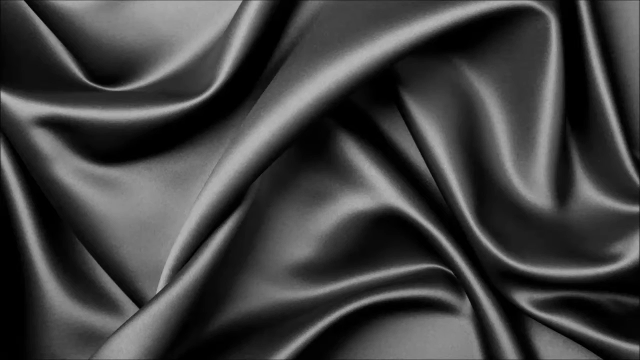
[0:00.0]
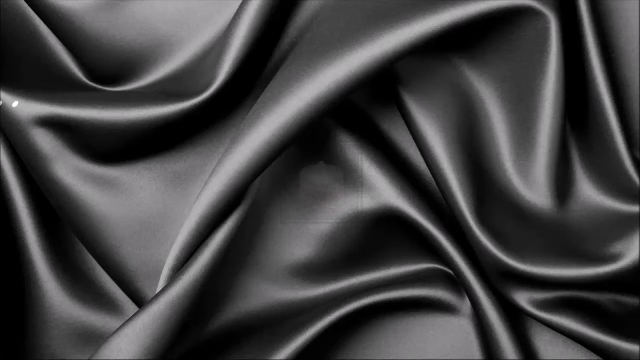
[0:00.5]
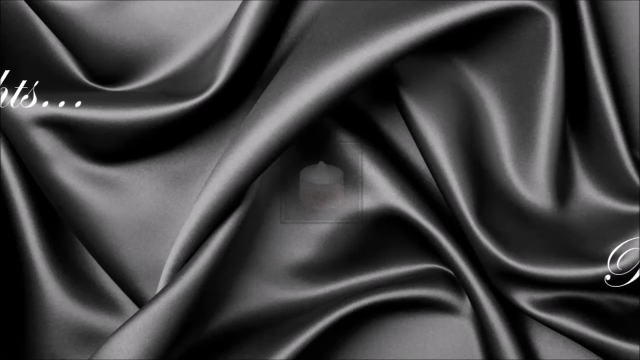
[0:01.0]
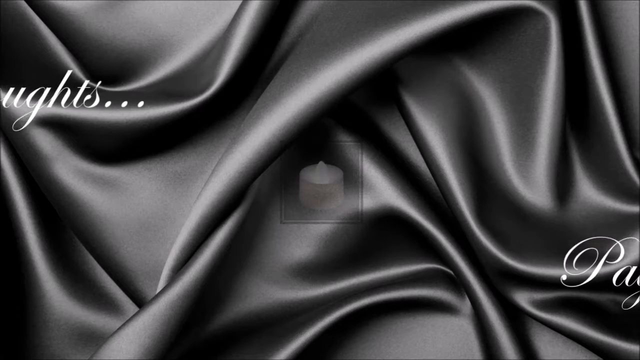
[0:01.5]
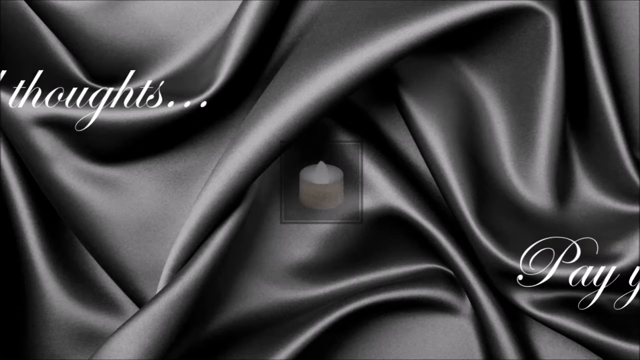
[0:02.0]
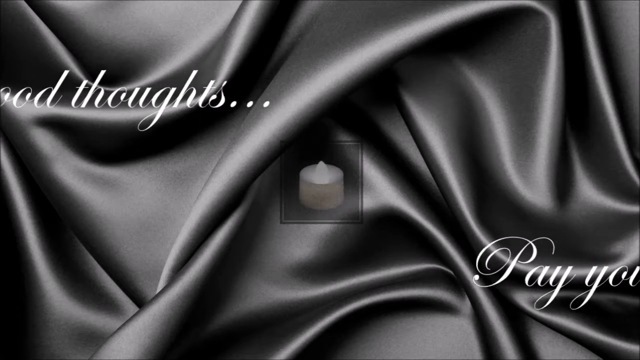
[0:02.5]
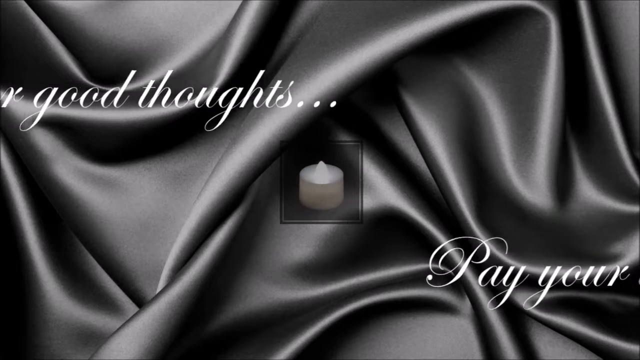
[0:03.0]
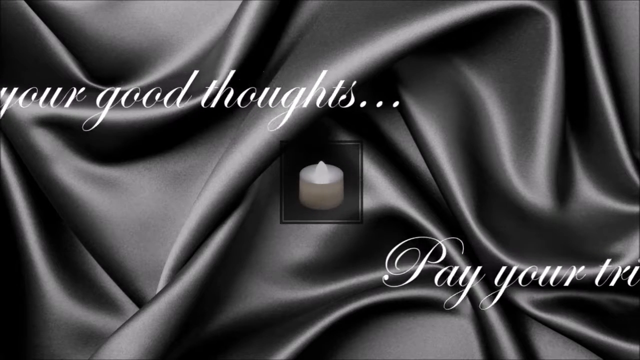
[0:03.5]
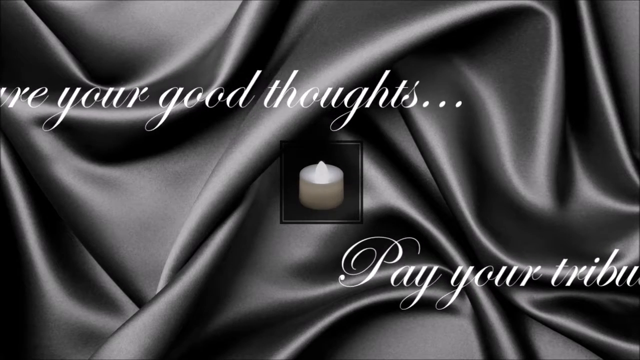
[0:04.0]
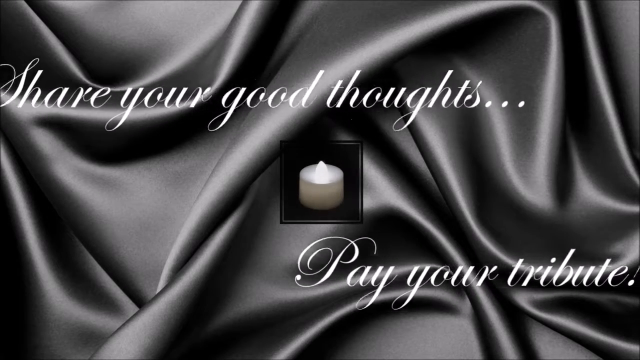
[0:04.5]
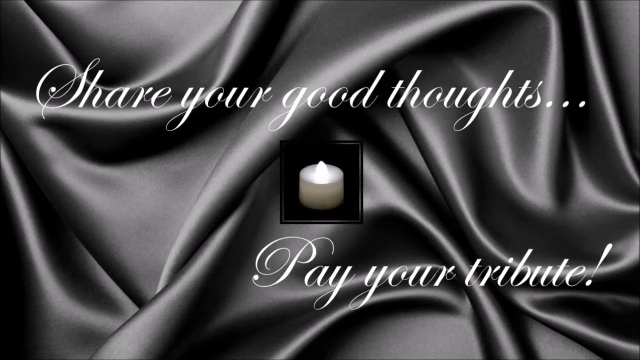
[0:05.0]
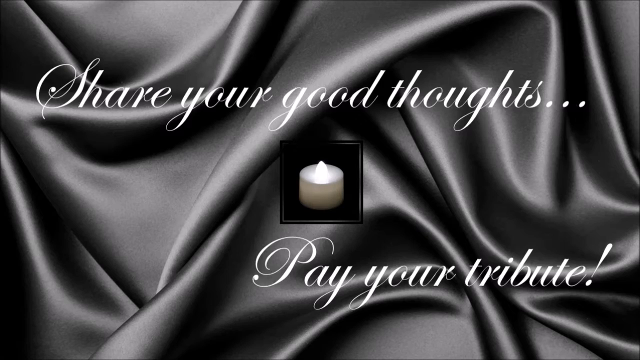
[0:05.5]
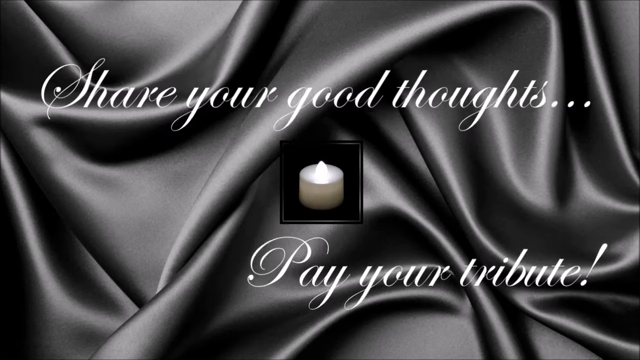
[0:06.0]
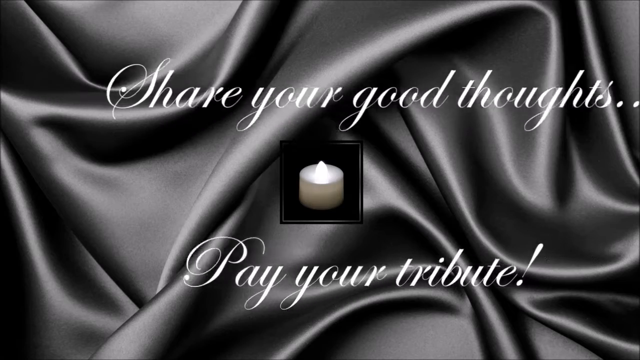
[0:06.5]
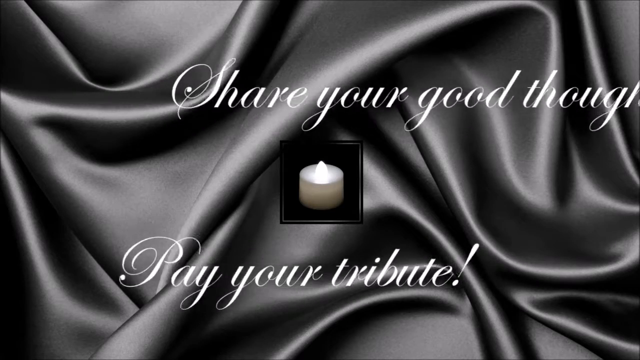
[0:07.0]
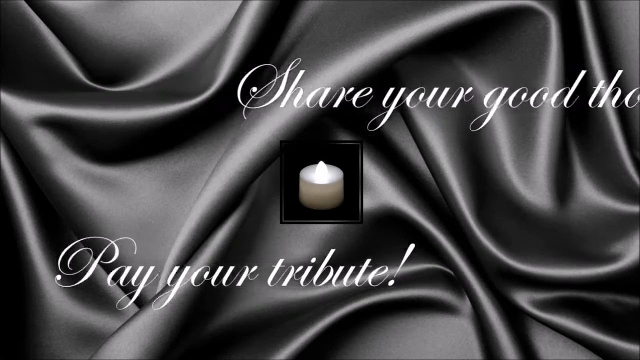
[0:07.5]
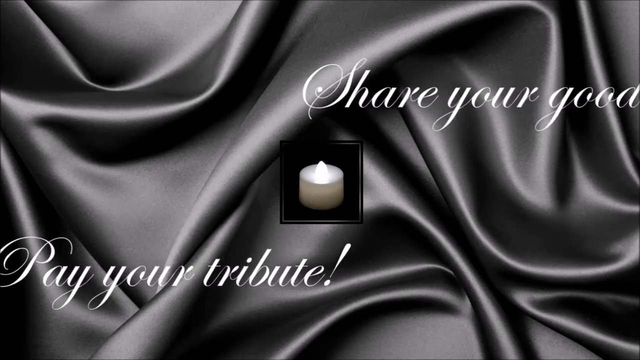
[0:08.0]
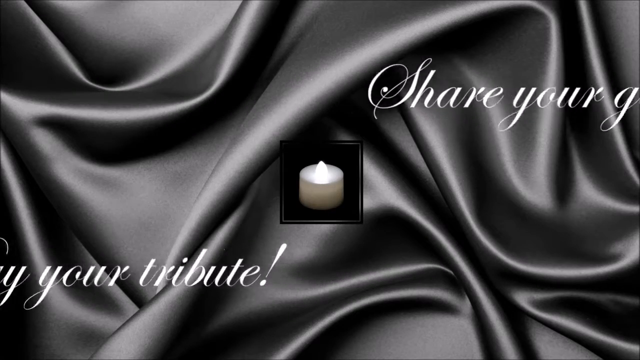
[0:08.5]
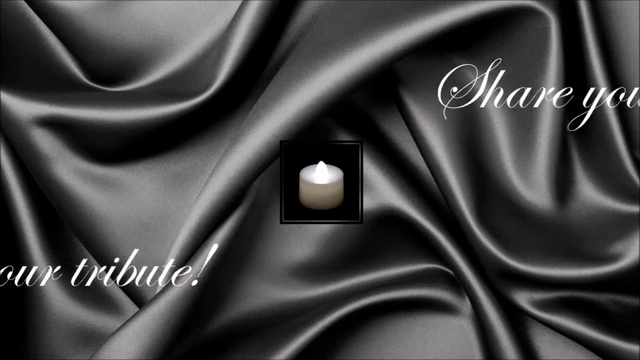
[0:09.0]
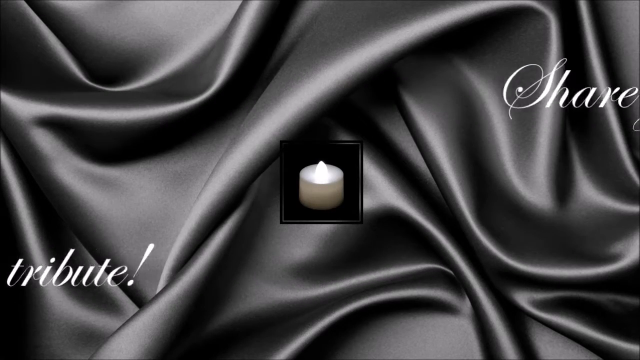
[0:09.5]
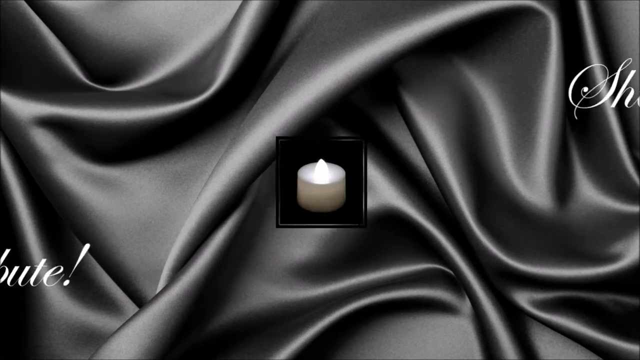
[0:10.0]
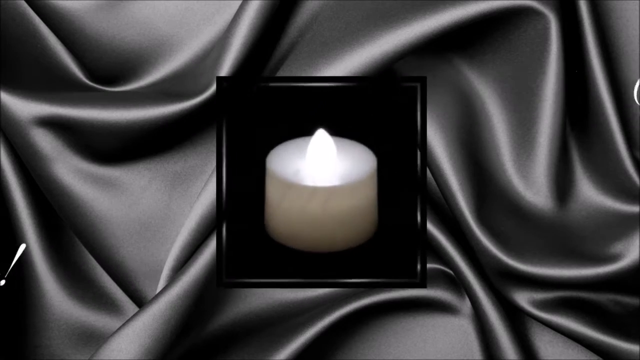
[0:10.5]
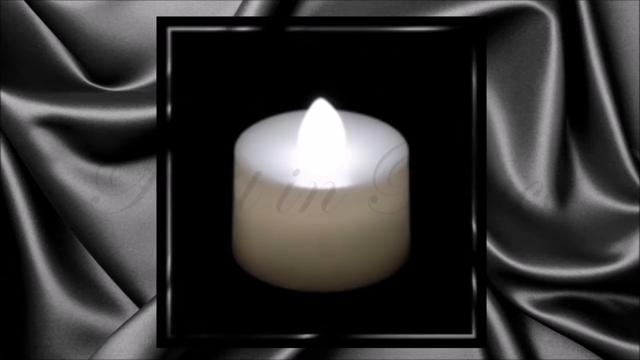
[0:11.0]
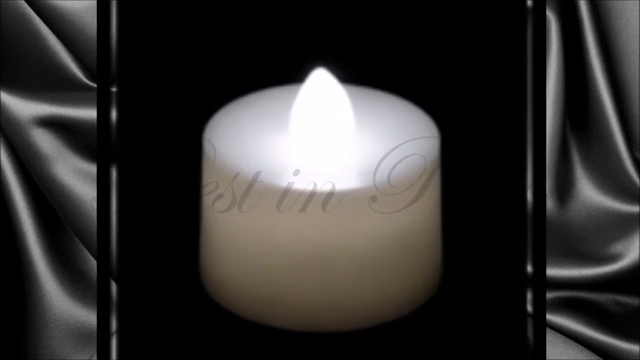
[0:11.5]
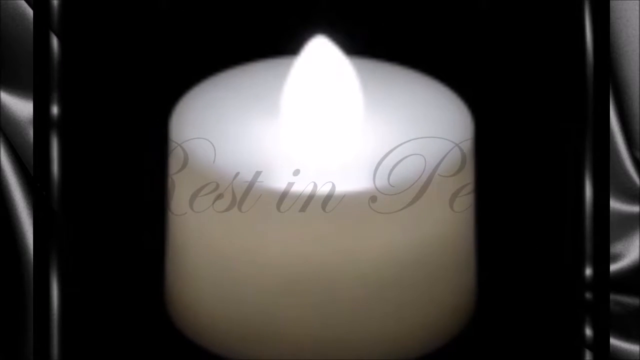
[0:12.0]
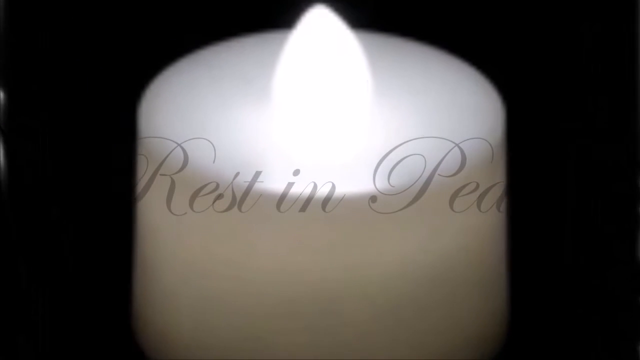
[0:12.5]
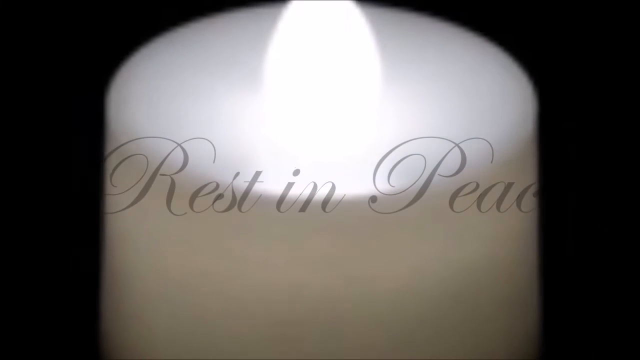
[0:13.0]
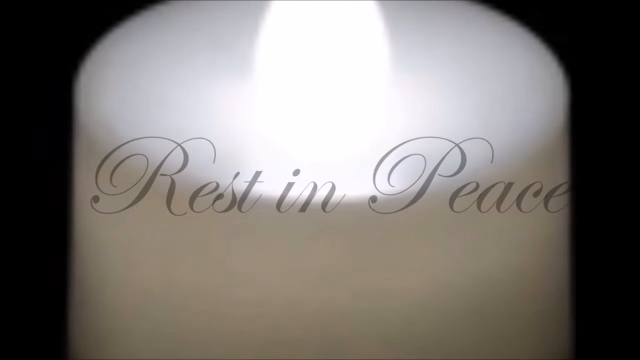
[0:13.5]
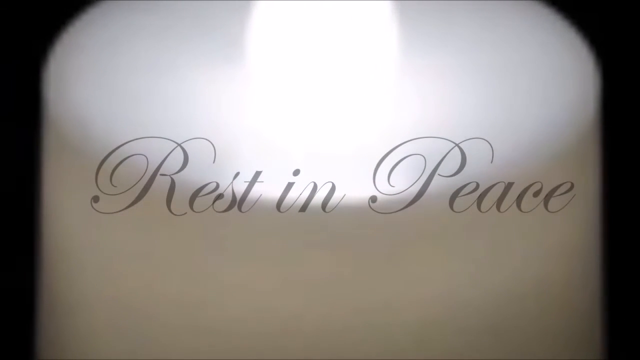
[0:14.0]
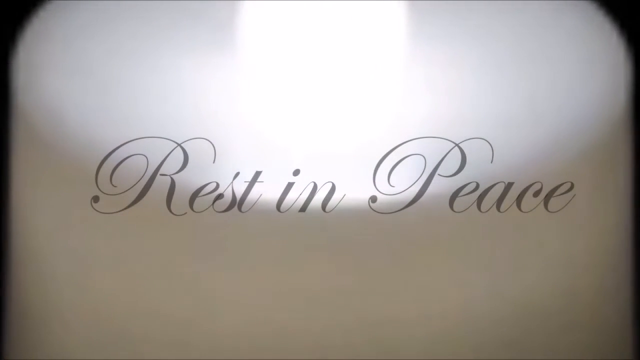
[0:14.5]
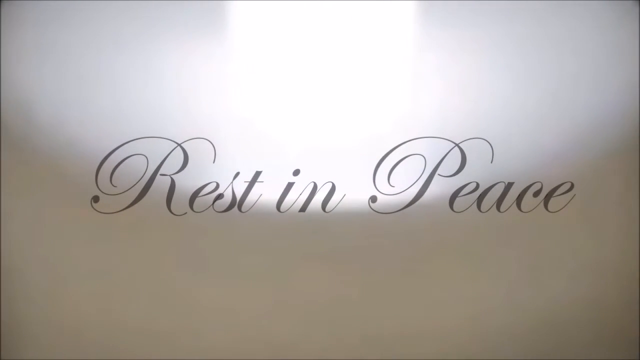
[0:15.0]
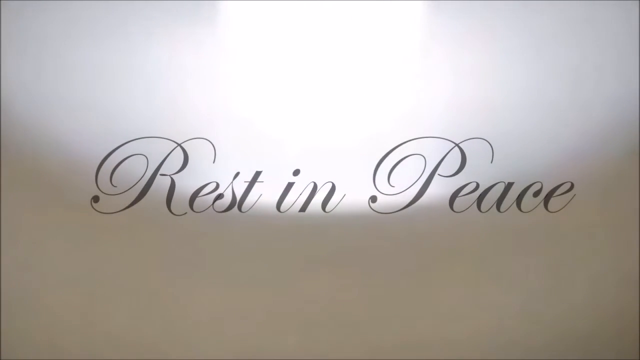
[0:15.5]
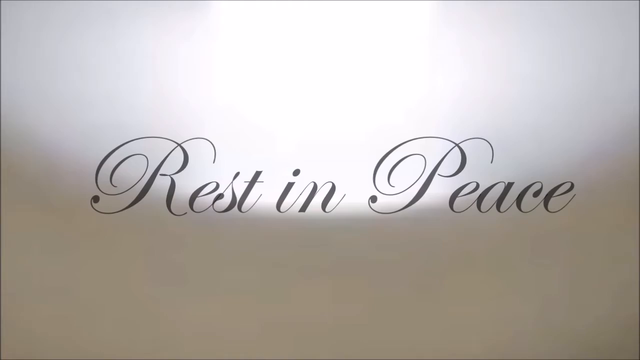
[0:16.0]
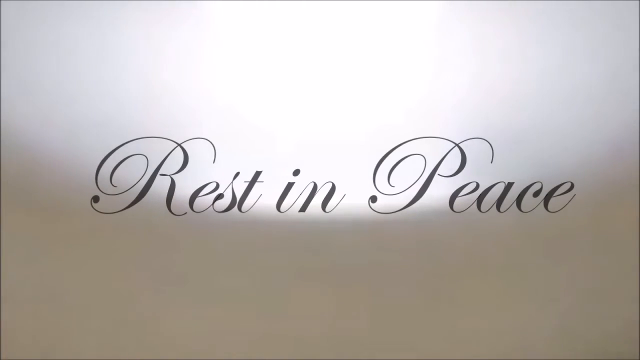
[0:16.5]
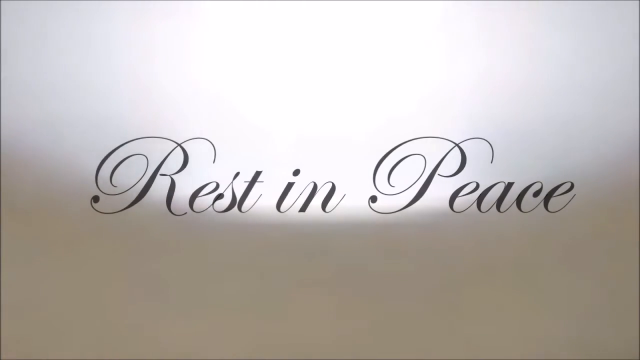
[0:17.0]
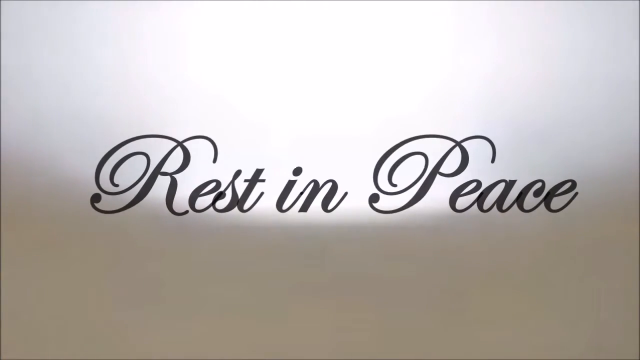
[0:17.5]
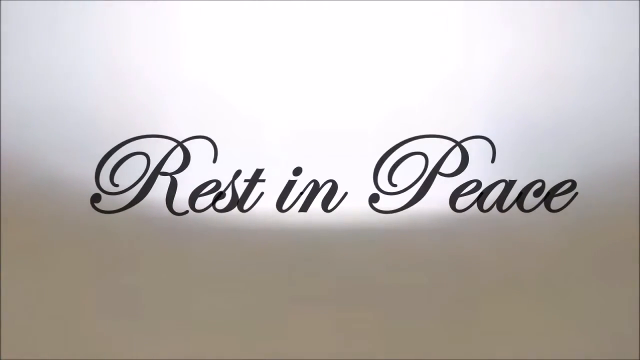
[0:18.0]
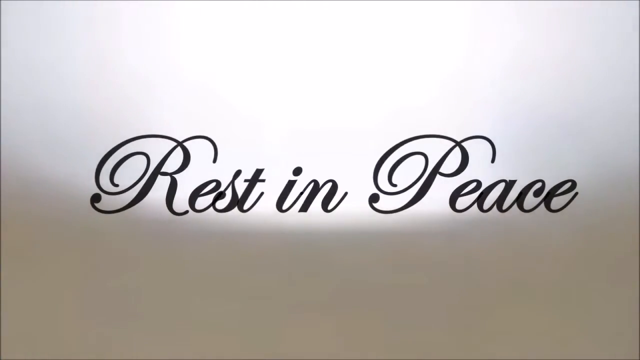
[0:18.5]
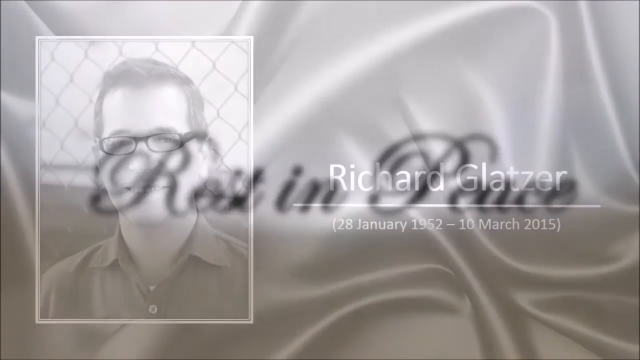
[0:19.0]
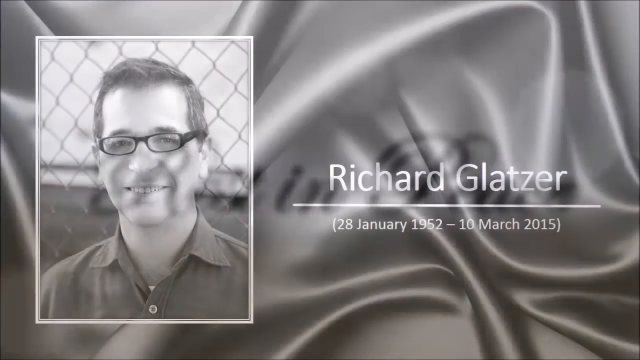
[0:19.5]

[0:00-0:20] The video opens on what looks like a beautifully placed sheet in black and white, with nothing else in the scene. The words "share your thoughts" and "pay your tribute" appear with a candle in the middle of the scene. The words slowly pan in from the sides: "share your thoughts" scrolls in from the top left and "pay your tribute" scrolls in from the bottom right. They continue off the scene, and the camera zooms in to the candle, where the words "rest in peace" appear. The camera zooms in quite a bit, and then the words "rest in peace" are put in bold. The video then changes to a picture of a man, probably in his fifties, wearing plastic black-rimmed glasses, with a smart haircut and a collared dress shirt. There is a chain-link fence in the background. The name "Richard Glatzer," apparently his name, appears along with the dates "28th of January 1952" and "10th of March 2015." It is a memorial video for this person.